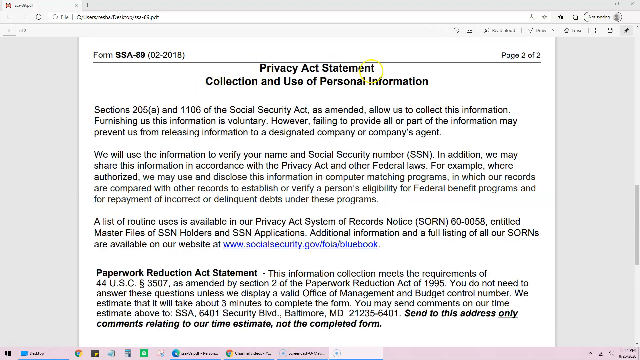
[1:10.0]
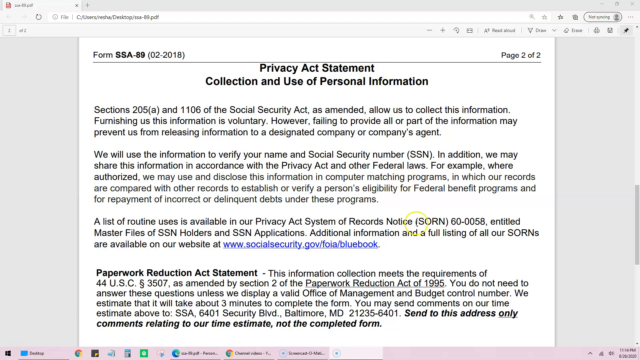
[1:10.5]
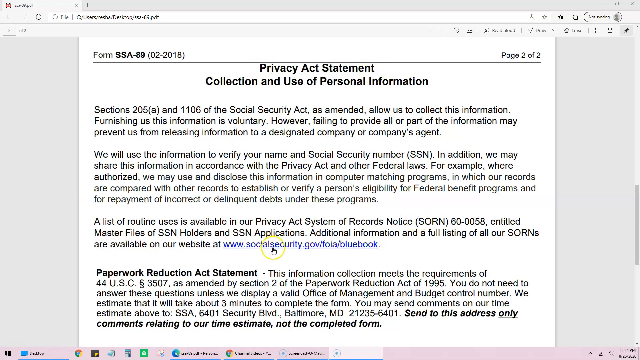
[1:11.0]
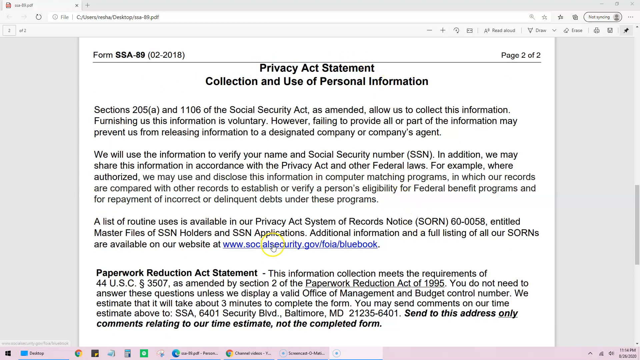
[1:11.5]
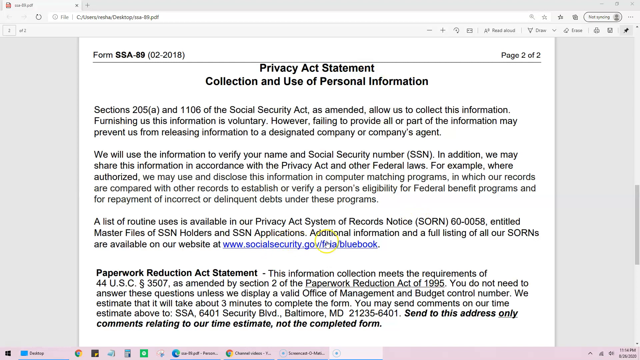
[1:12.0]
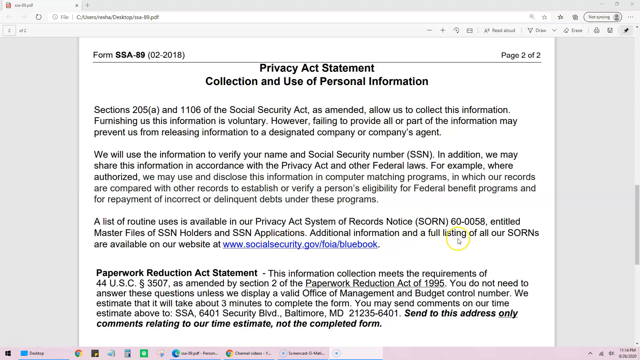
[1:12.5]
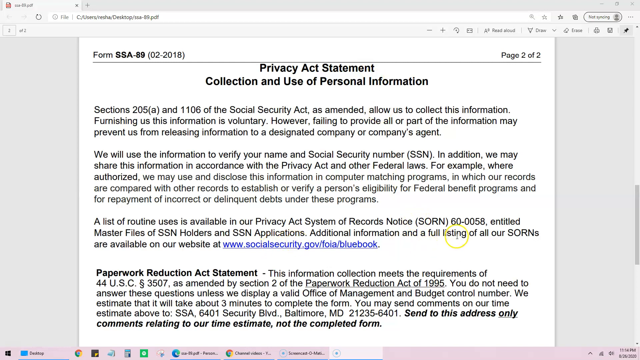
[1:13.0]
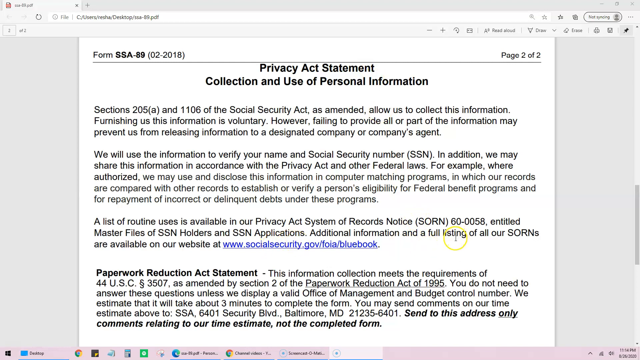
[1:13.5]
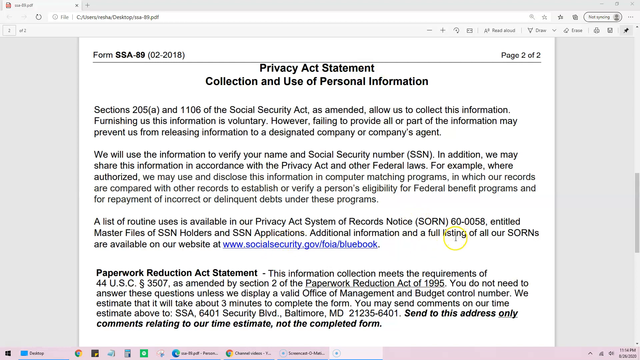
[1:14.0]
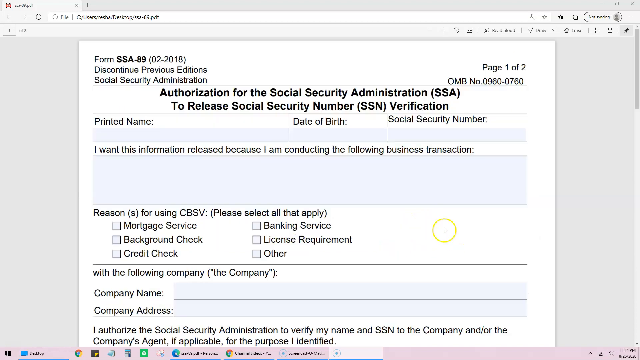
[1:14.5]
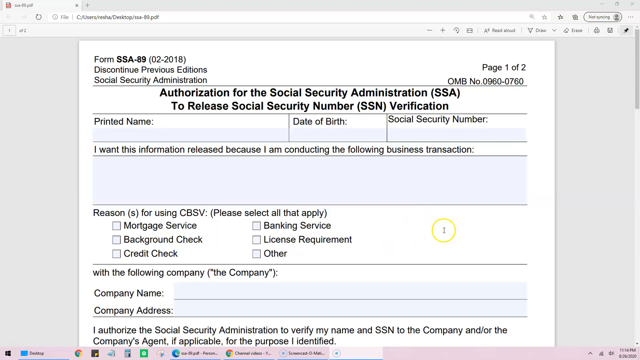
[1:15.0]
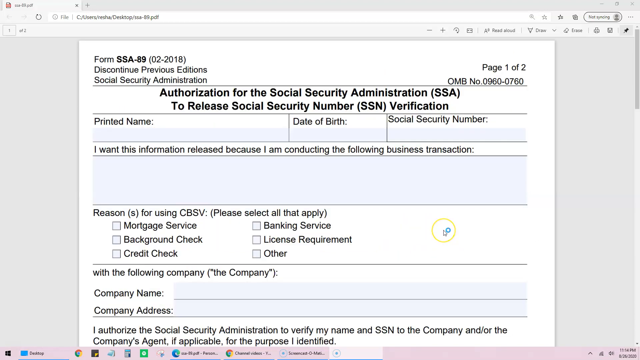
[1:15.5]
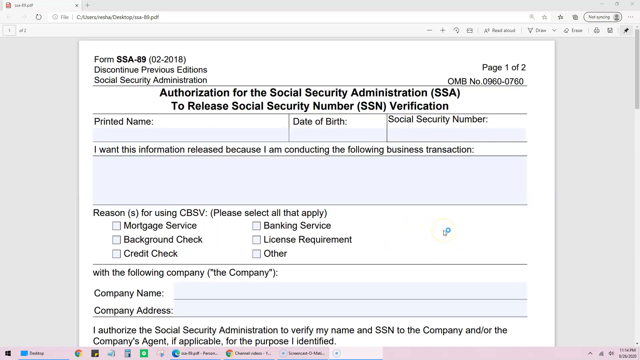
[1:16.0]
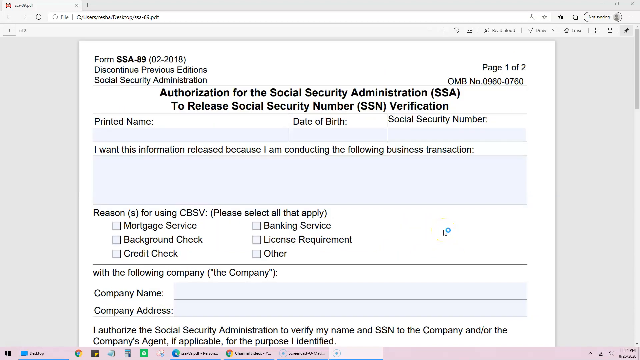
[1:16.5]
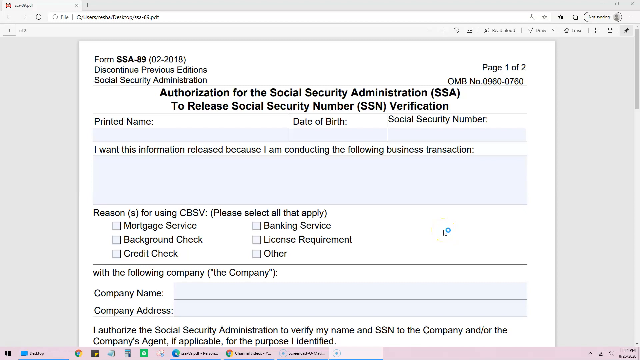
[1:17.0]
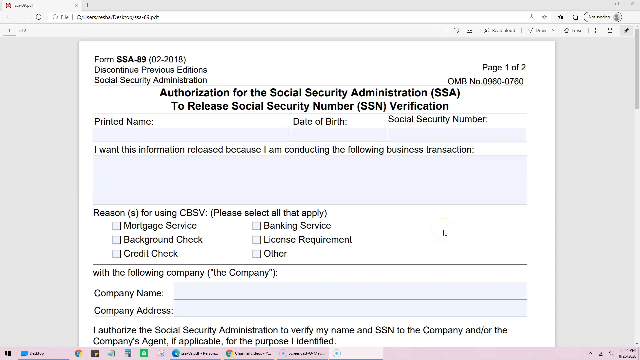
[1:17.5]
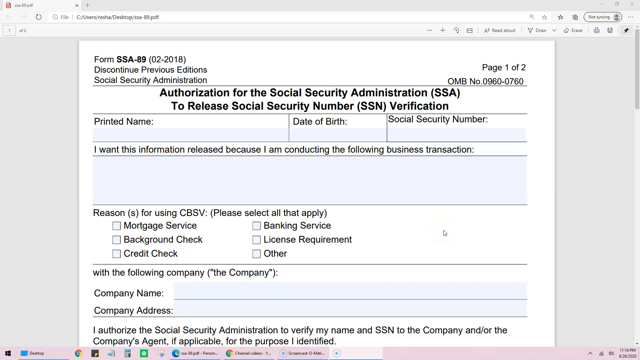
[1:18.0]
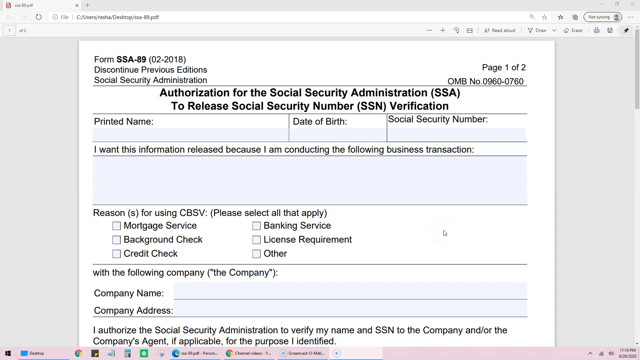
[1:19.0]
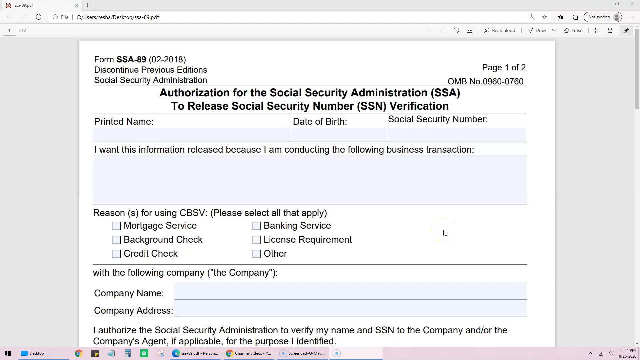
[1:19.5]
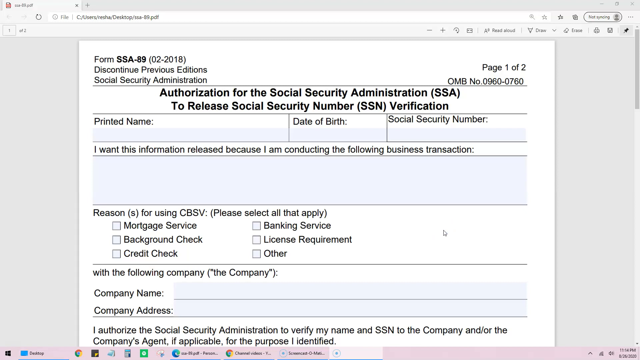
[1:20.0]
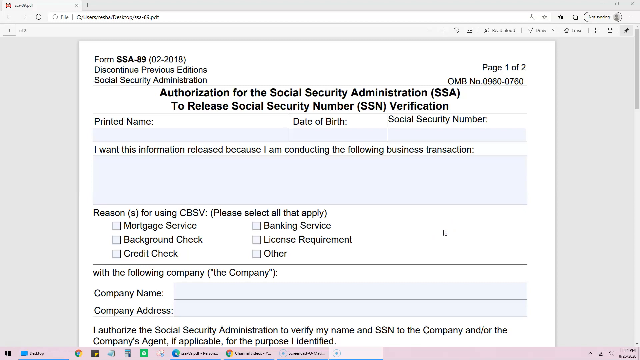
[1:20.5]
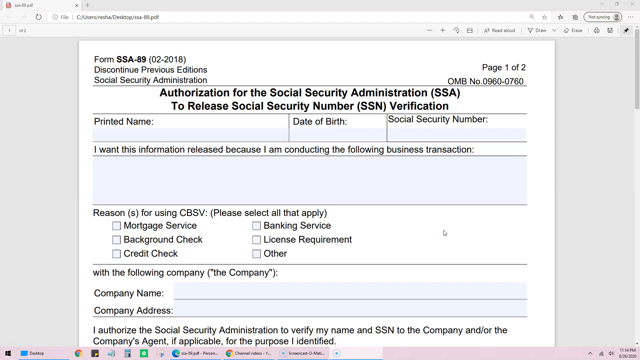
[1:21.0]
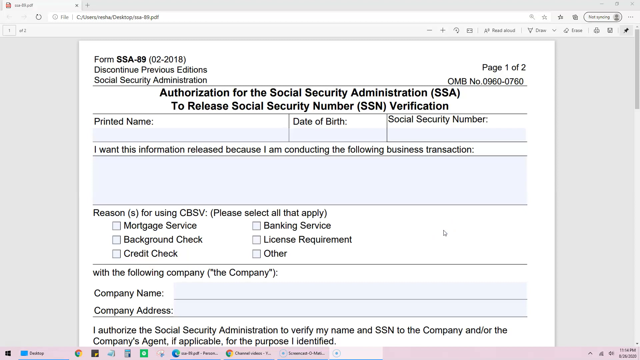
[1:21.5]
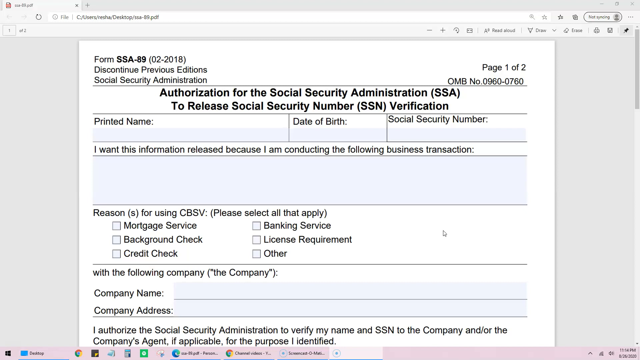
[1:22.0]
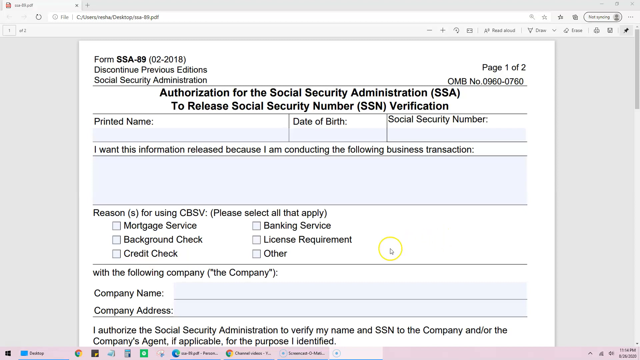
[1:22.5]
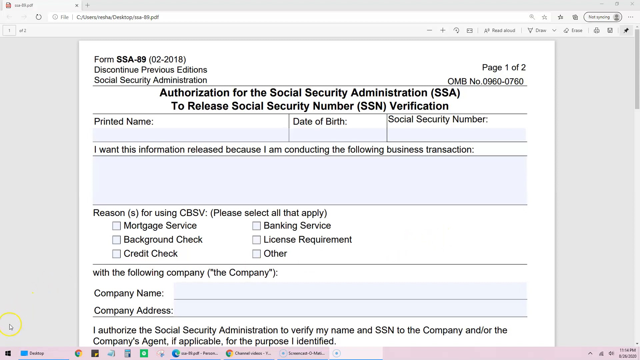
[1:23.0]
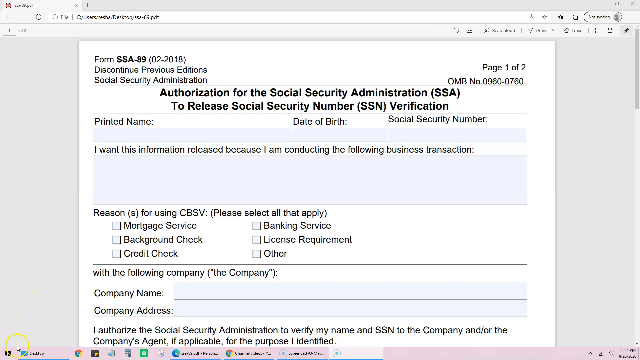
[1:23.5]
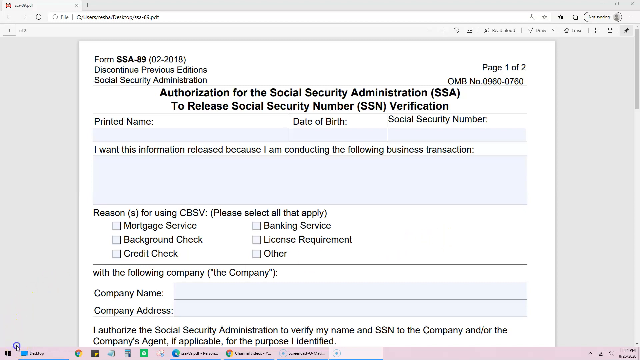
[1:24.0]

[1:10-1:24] Page 2 of 2 of form SSA-89 is shown while someone moves a mouse pointer with a yellow circle around it for high visibility around the page. The page is titled "Privacy Act Statement Collection and Use of Personal Information," the legal terms informing people what their submitted information could be used for. The top part of the form, page 1 of 2, with the title SSA-89, is then seen again.